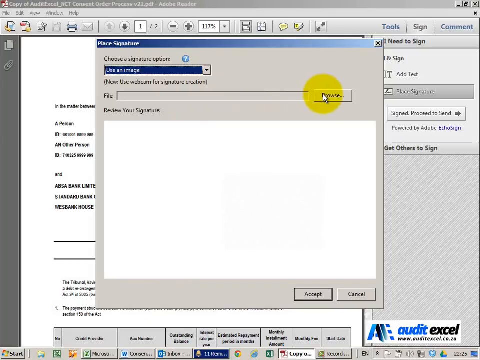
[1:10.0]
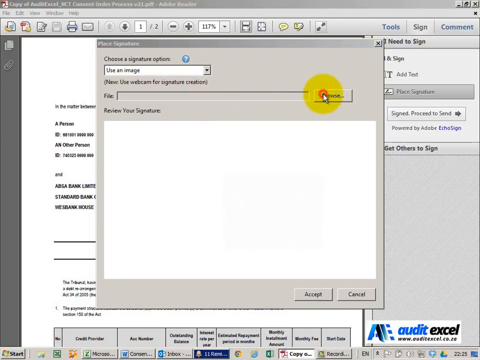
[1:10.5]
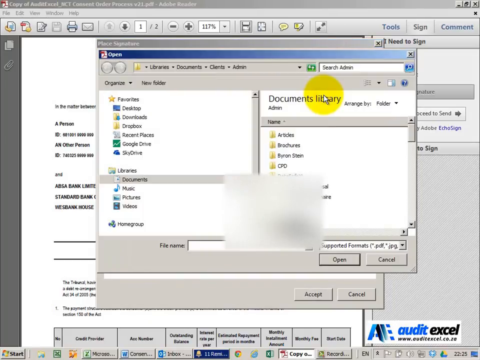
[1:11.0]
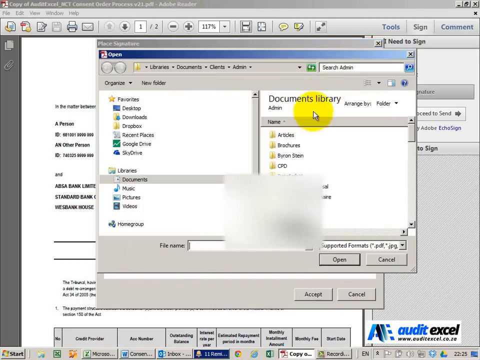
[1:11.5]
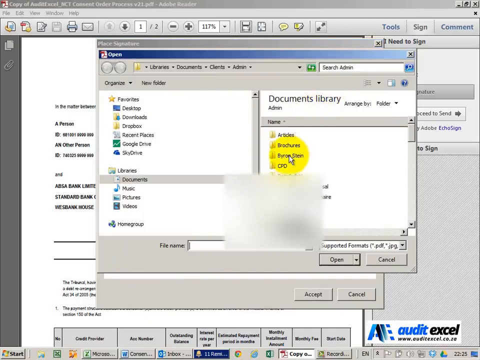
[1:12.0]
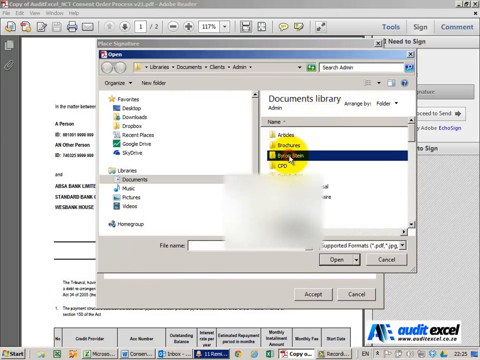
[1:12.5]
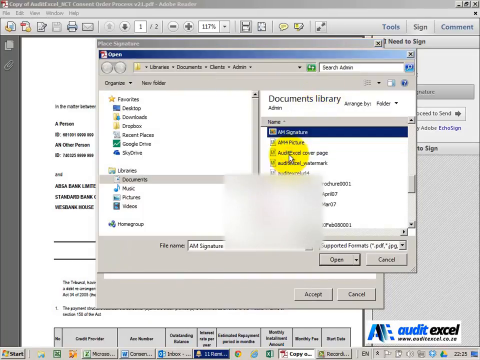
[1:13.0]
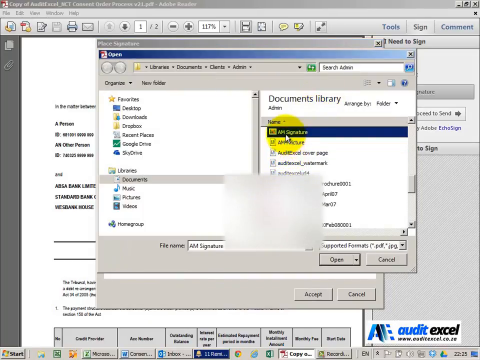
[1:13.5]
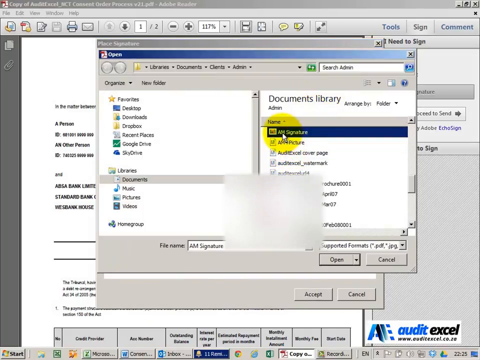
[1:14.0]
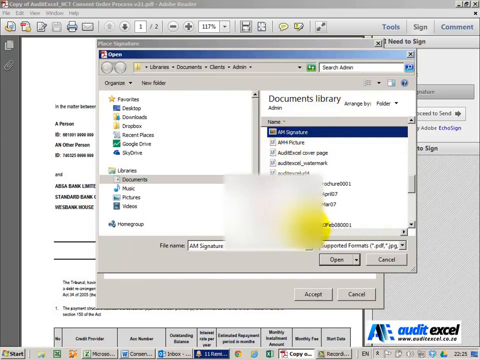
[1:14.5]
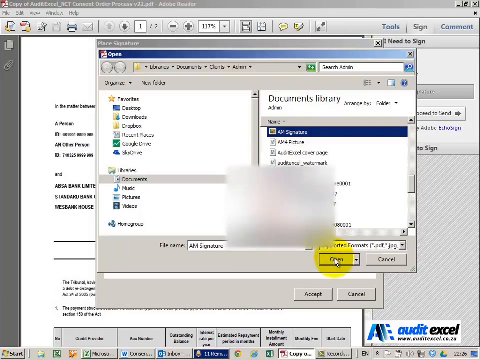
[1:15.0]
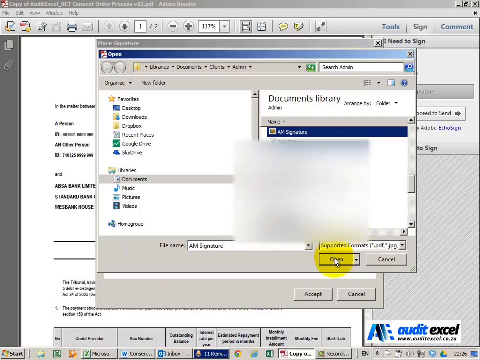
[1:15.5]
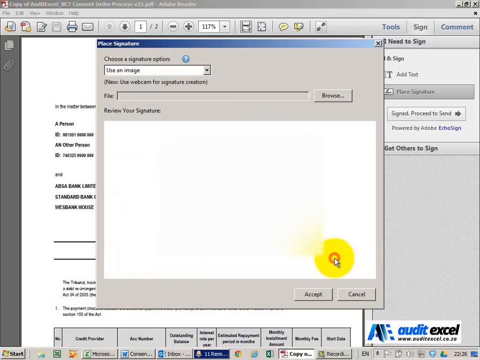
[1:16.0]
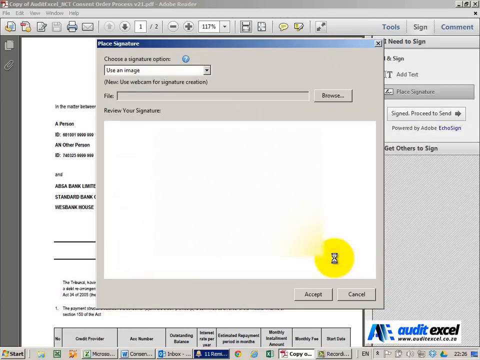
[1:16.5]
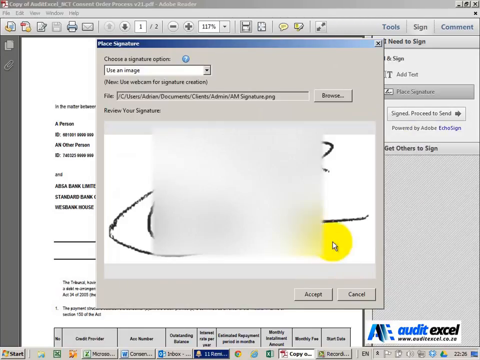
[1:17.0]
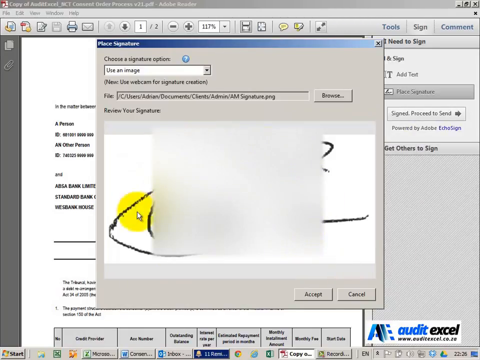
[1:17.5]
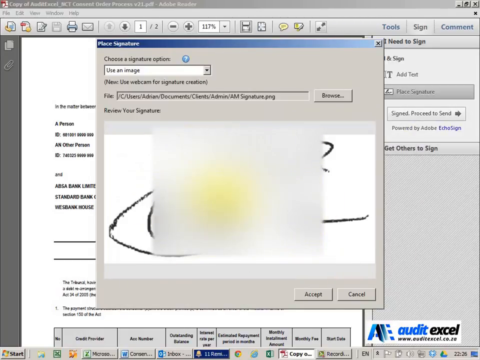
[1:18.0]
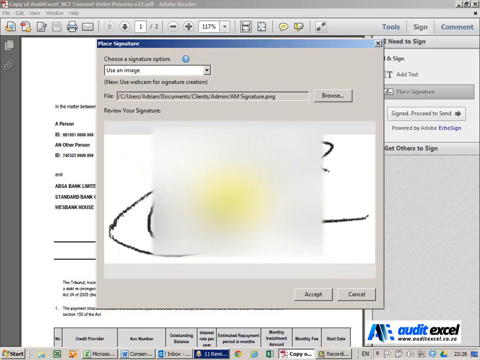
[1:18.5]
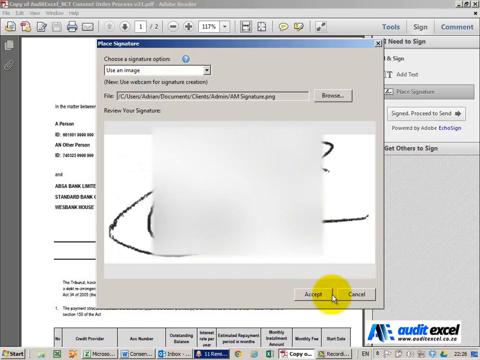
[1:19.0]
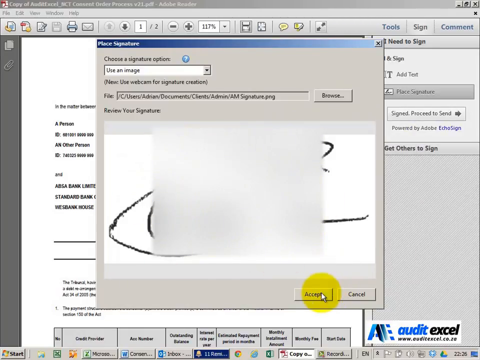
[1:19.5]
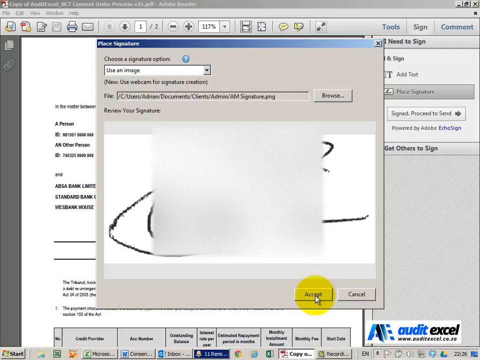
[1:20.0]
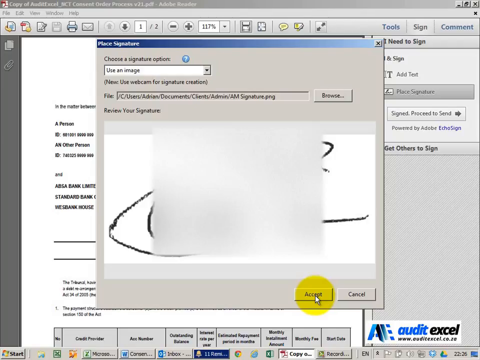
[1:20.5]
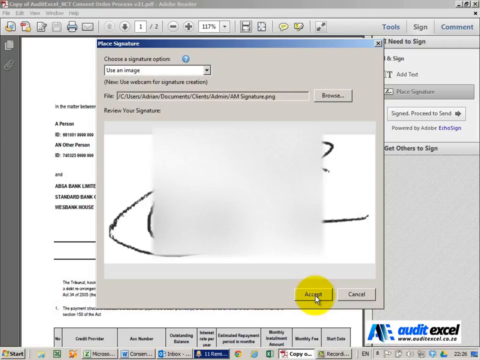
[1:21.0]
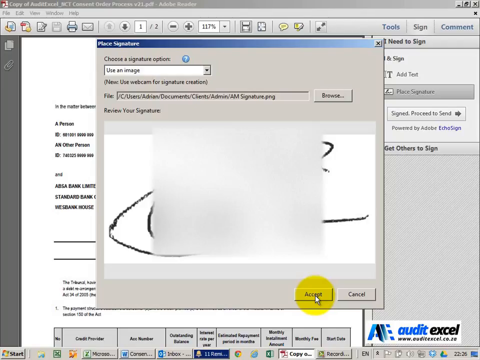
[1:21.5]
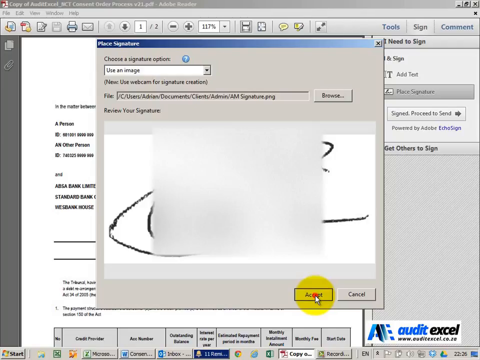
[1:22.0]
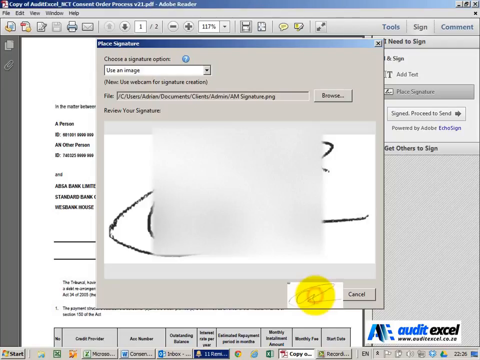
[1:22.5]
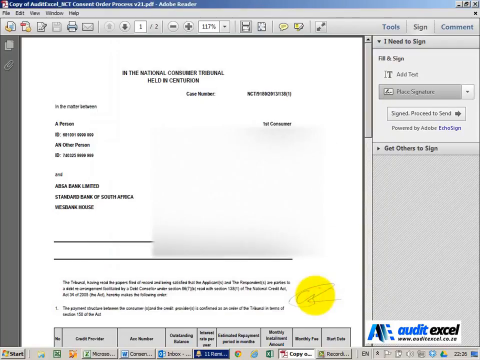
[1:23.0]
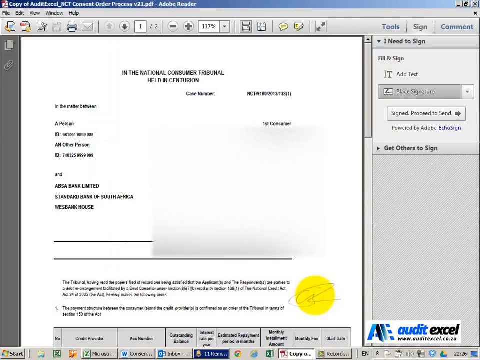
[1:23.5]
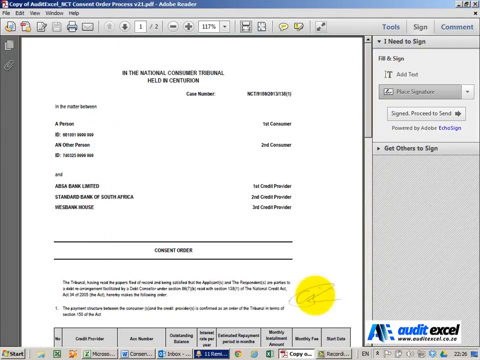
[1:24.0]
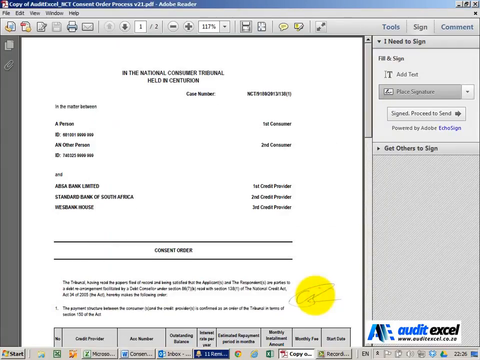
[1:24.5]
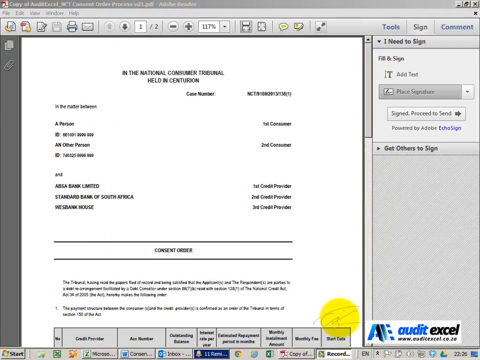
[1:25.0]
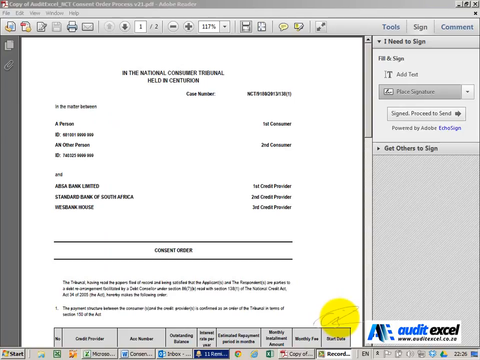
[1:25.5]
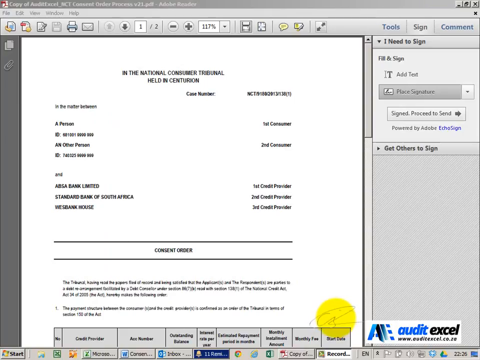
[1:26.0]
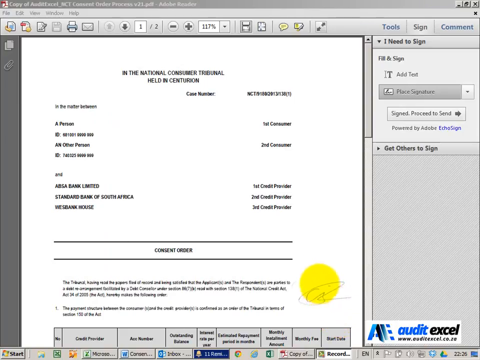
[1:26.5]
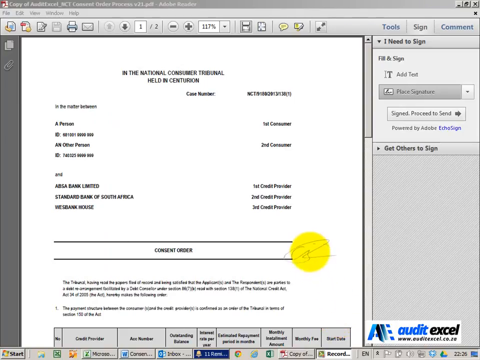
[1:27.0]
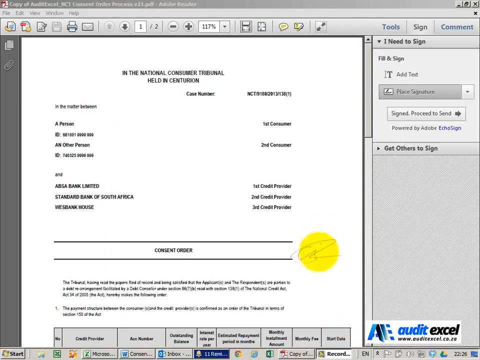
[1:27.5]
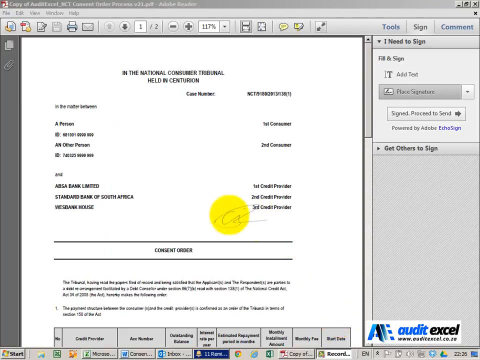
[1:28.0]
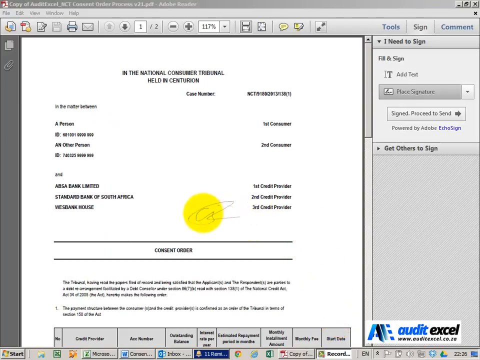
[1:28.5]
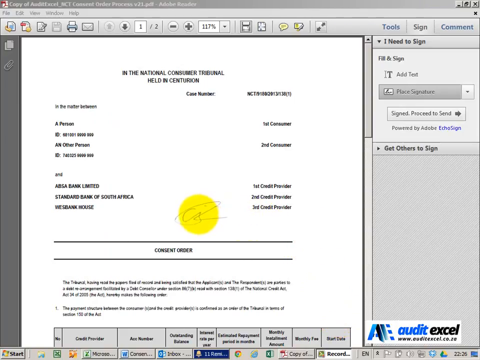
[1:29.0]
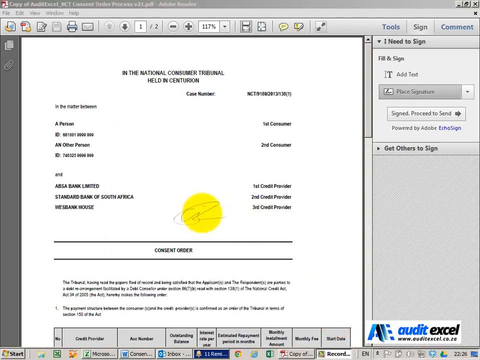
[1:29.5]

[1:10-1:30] The user is in their document library and selects a file, much of which is blurred out, apparently for privacy; what shows looks like some sort of poorly drawn logo. The yellow-highlighted mouse pointer seems to move erratically in some areas and less in others. A browse option is then open, though the user does not seem to be searching for anything in particular. The user goes through the file, apparently making edits to it.